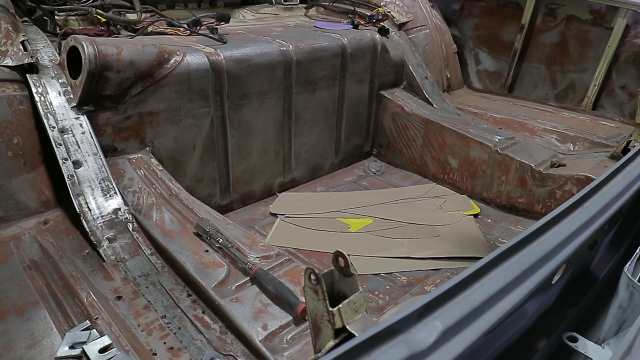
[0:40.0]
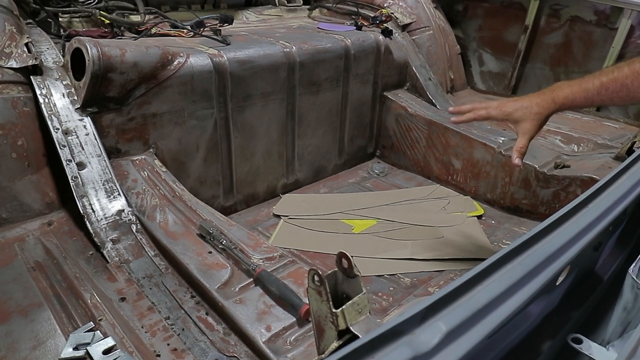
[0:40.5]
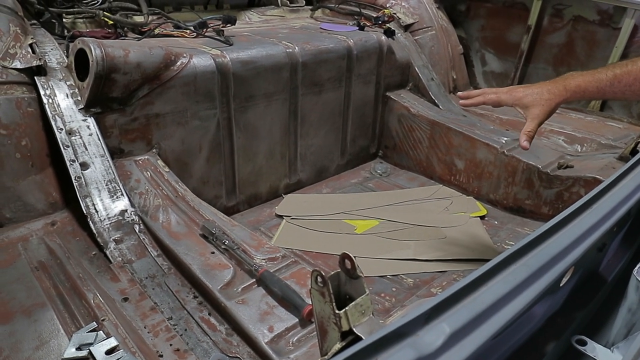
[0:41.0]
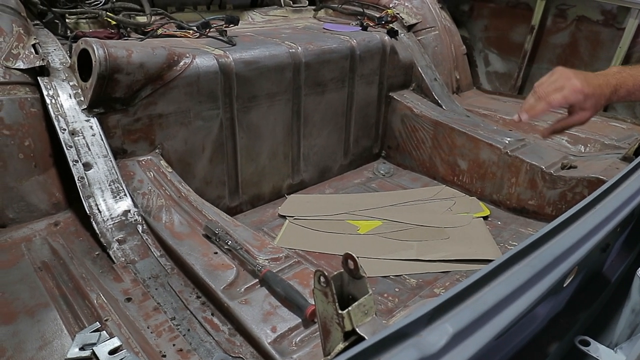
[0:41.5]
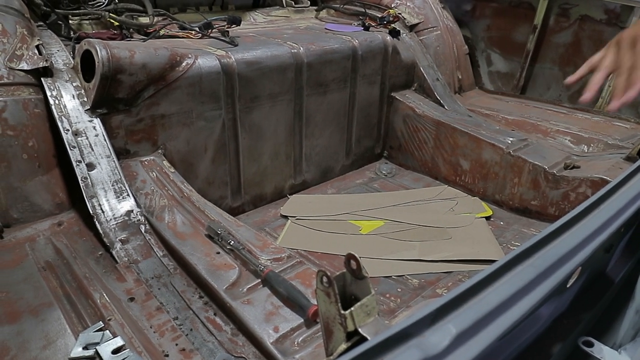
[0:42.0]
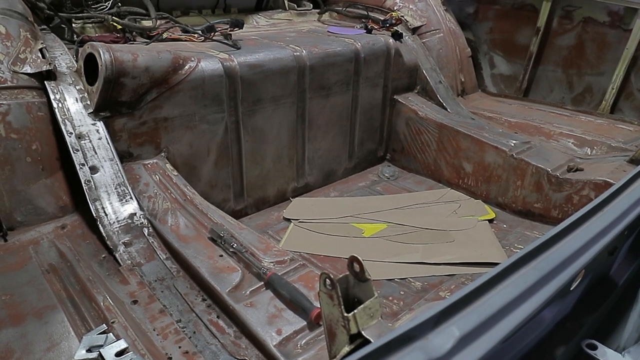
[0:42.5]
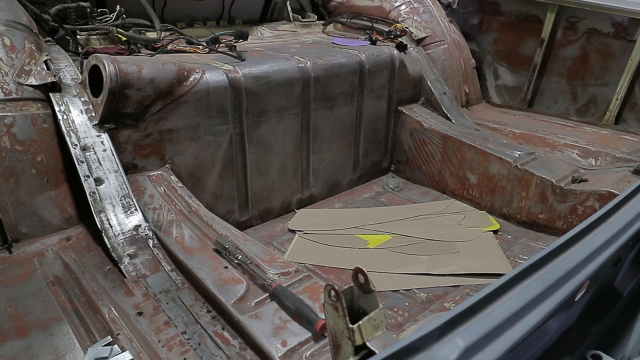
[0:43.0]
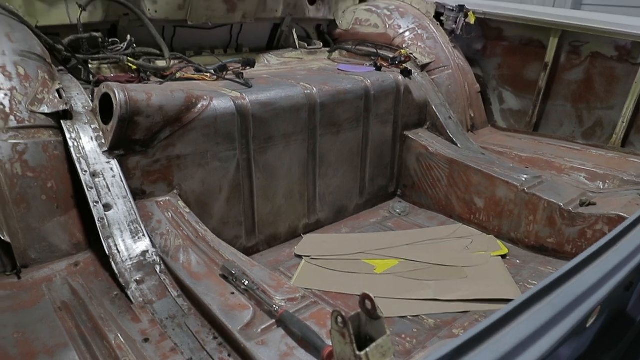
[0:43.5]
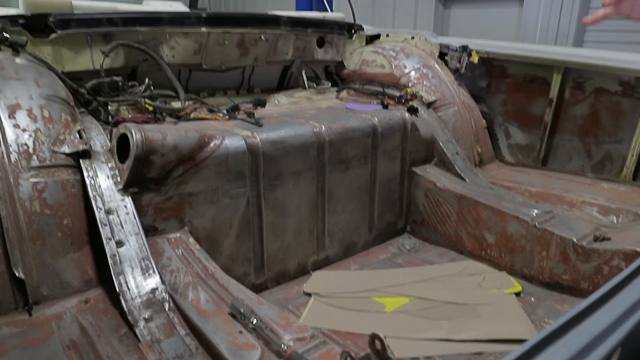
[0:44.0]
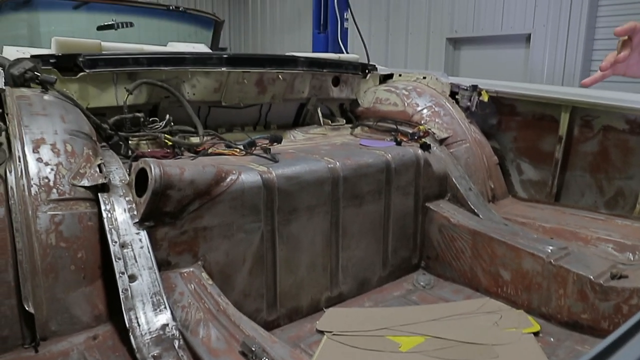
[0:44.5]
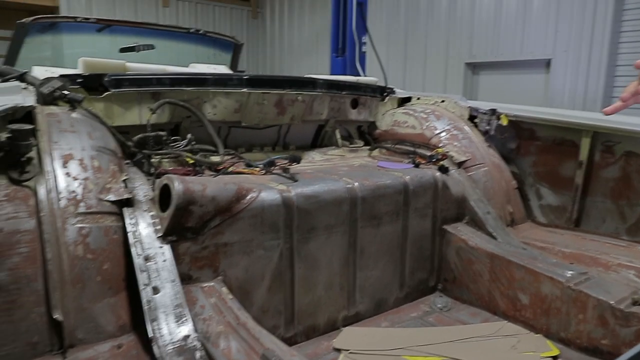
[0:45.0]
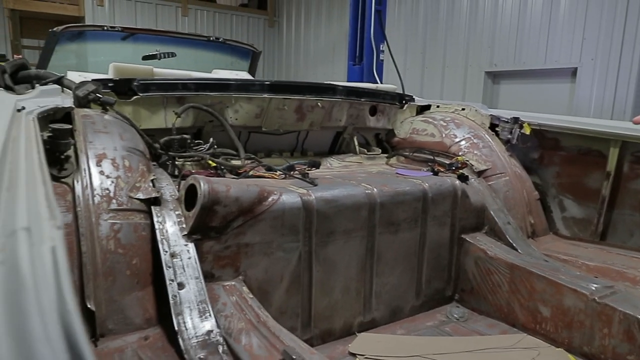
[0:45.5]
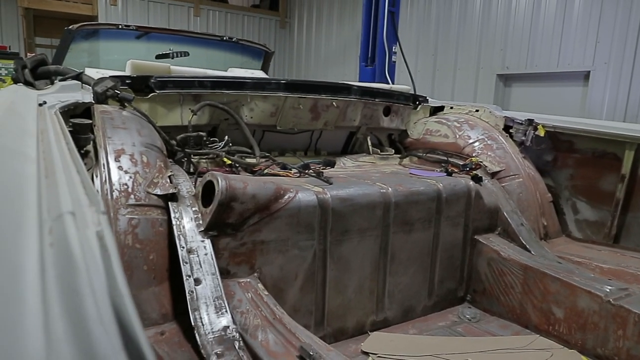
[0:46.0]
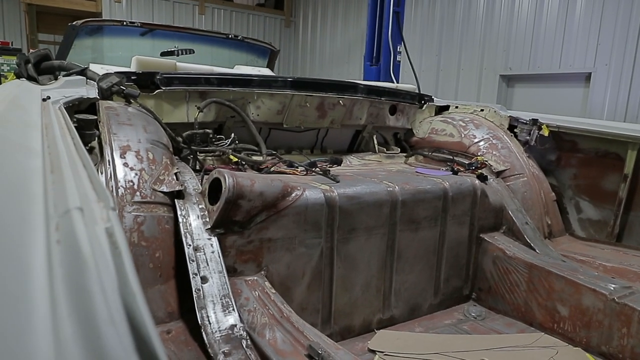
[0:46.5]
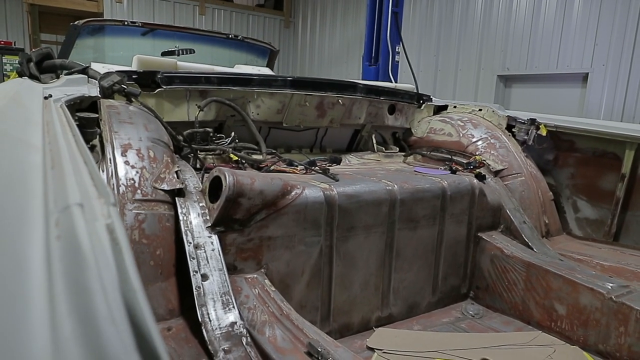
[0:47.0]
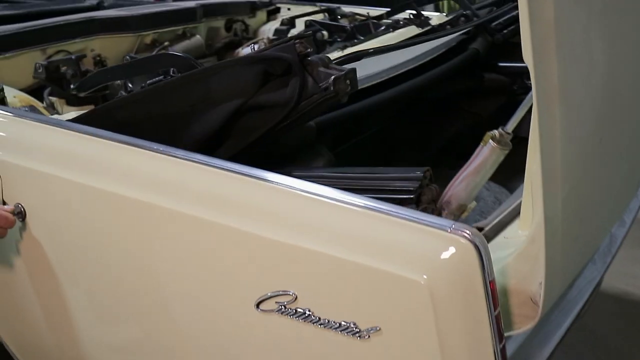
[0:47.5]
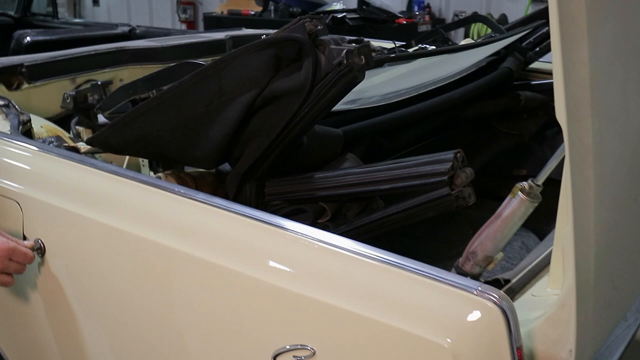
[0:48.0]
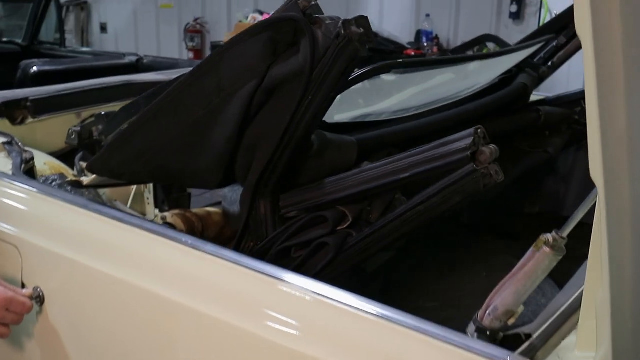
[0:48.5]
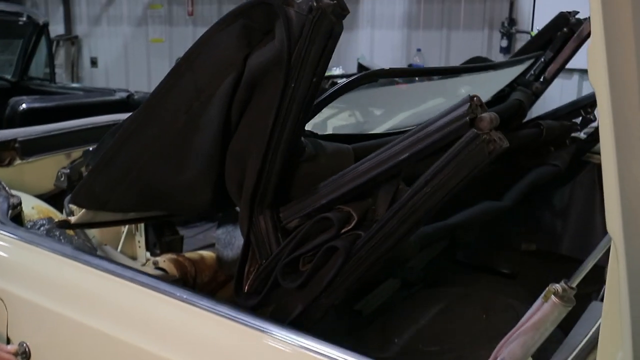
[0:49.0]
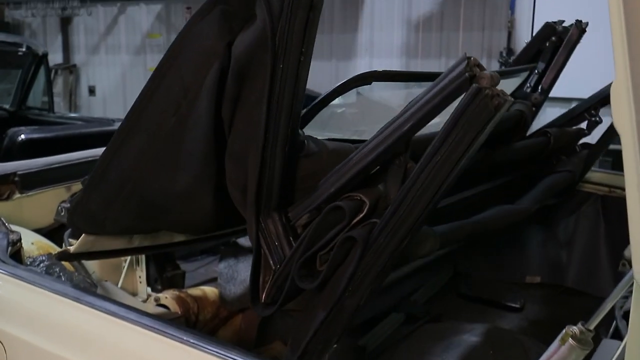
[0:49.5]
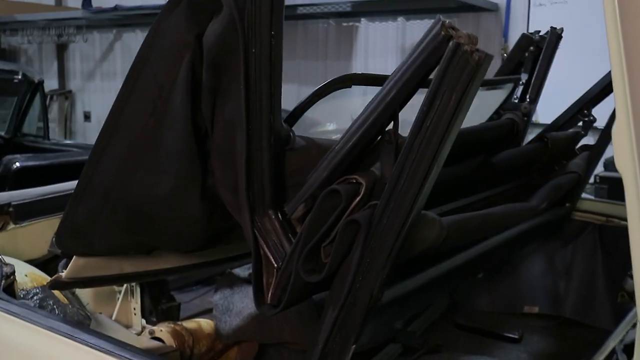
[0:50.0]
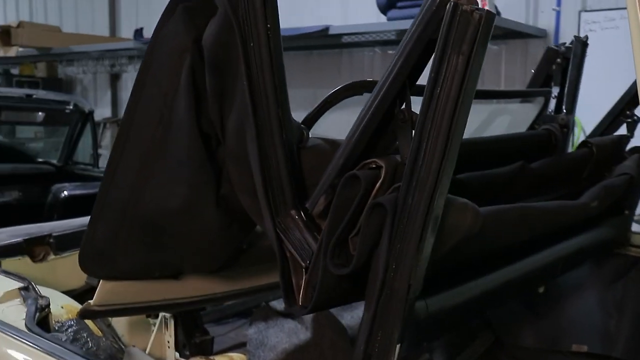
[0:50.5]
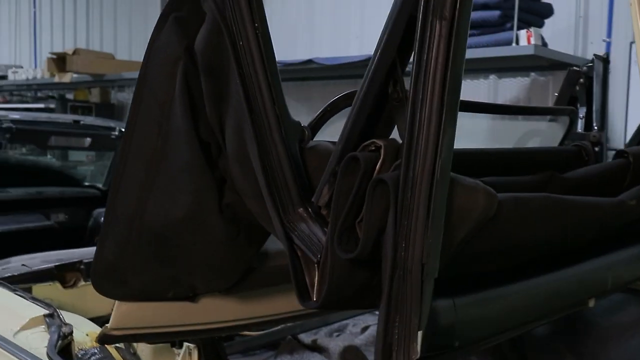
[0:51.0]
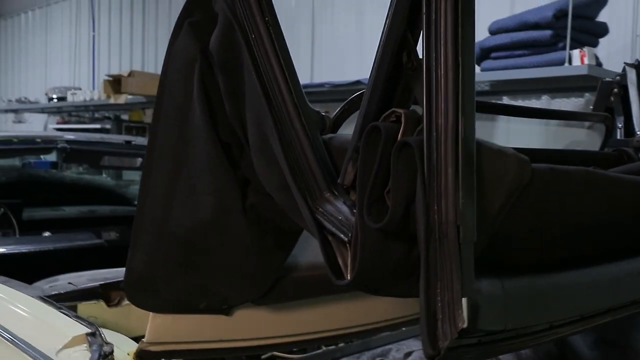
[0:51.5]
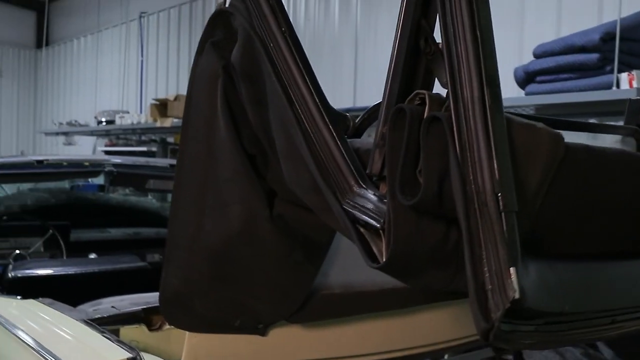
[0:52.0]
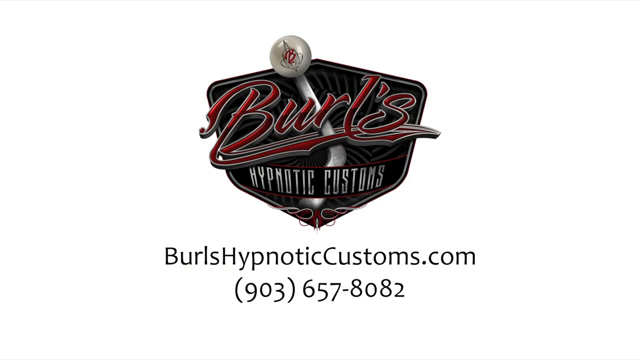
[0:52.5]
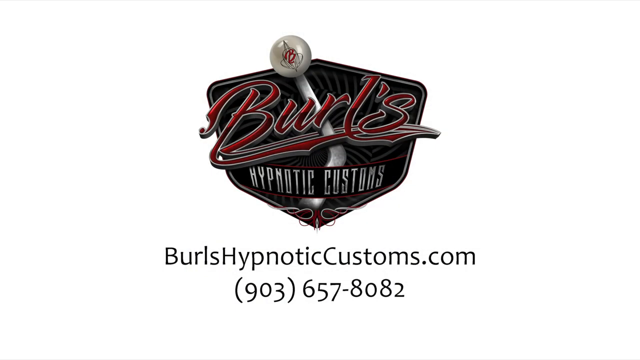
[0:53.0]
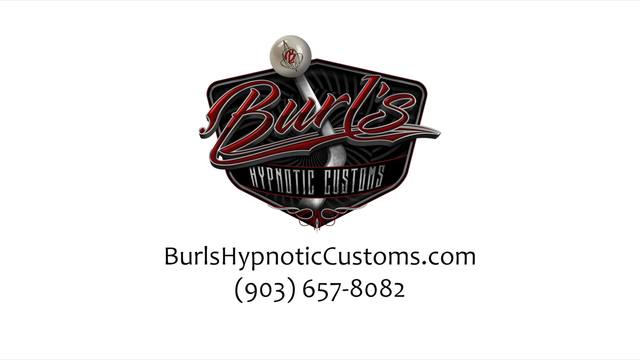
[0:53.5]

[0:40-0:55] A close-up shows the rusted-out, damaged area of the car. The view then pans out to the car and shows the tarp hood part being raised and lifted above the car. An advertisement for the company working on the vehicle follows. The logo reads "Burl's" in red, with a black diamond behind it, and underneath in white it says "Hypnotic Customs". A white gear shift appears in the middle of the logo. At the bottom of the screen it says "BurlsHypnoticCustoms.com" along with the telephone number "903-657-8082".